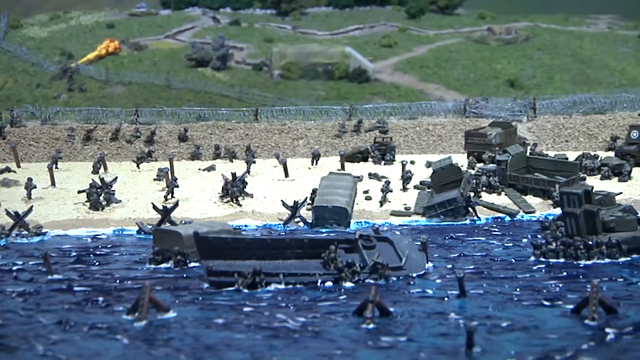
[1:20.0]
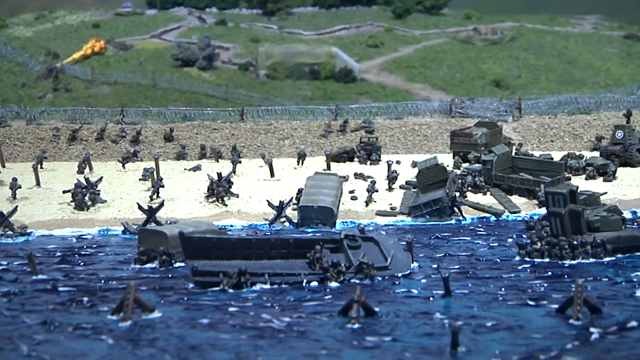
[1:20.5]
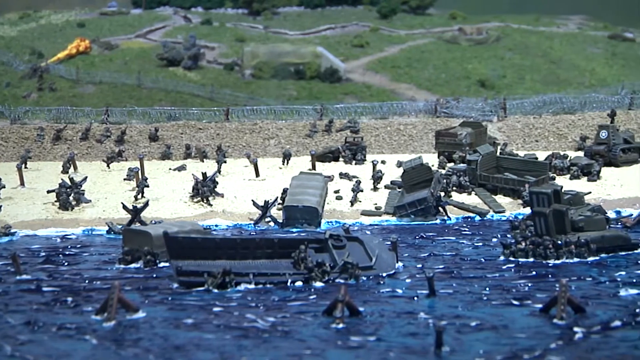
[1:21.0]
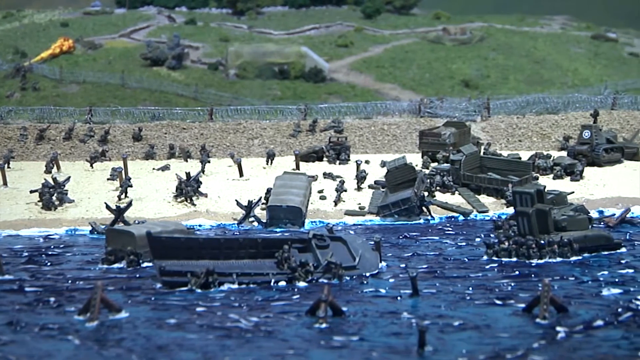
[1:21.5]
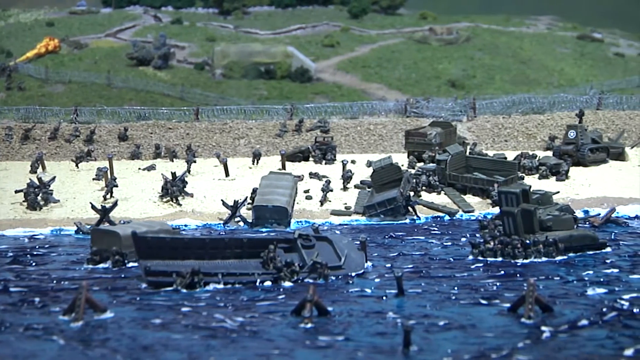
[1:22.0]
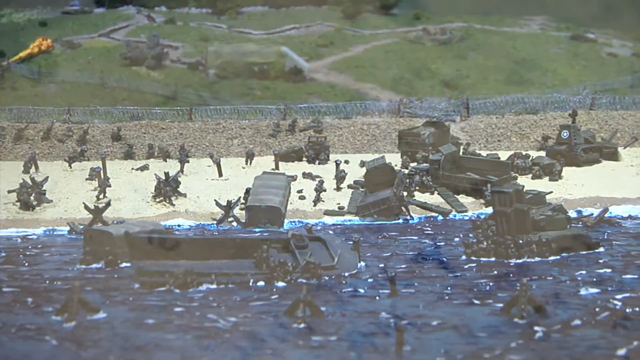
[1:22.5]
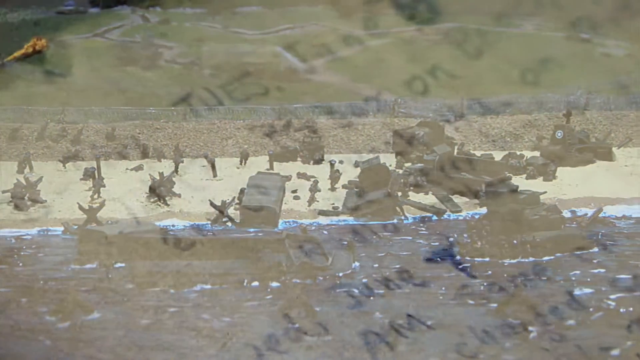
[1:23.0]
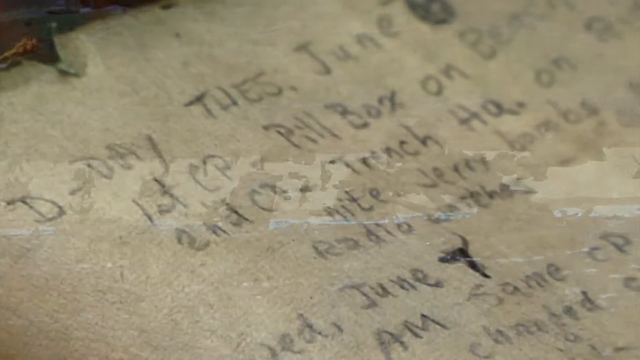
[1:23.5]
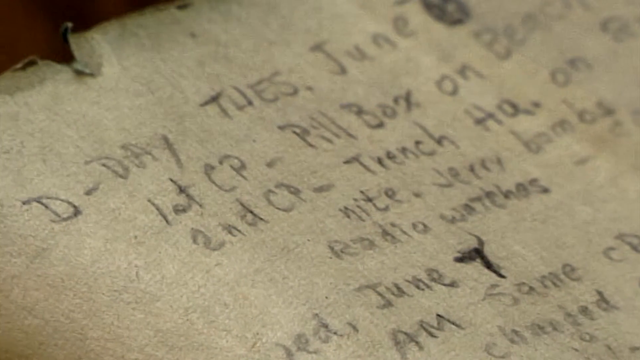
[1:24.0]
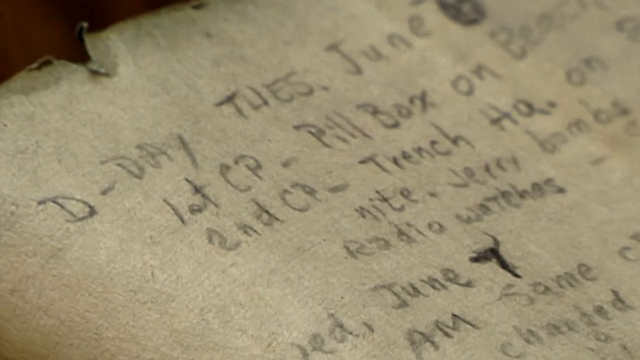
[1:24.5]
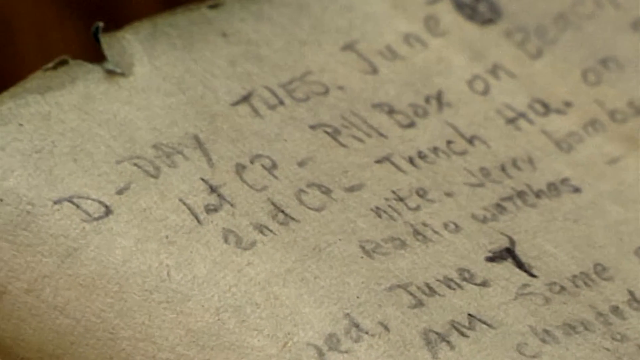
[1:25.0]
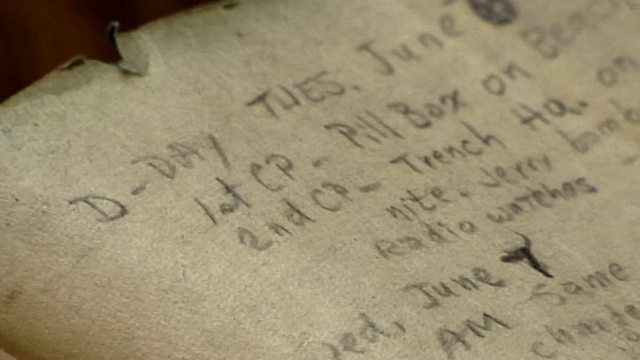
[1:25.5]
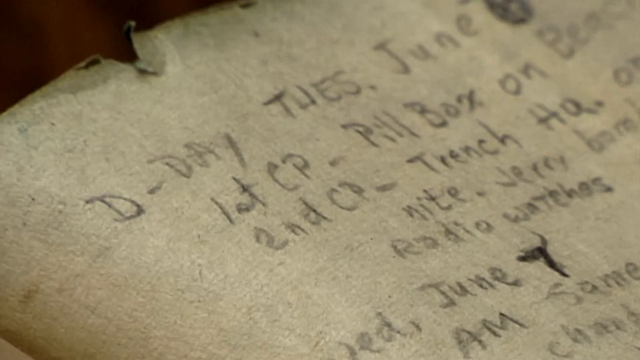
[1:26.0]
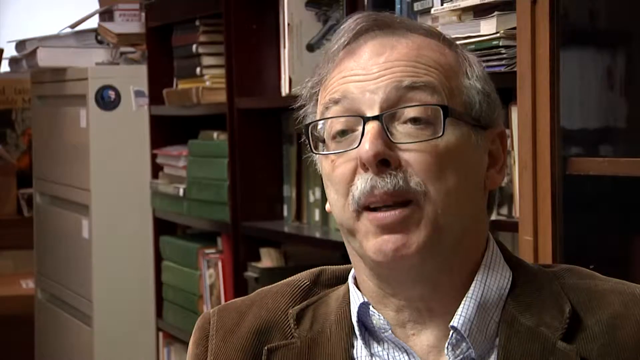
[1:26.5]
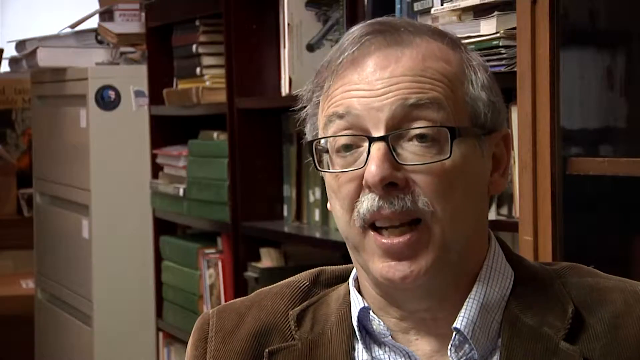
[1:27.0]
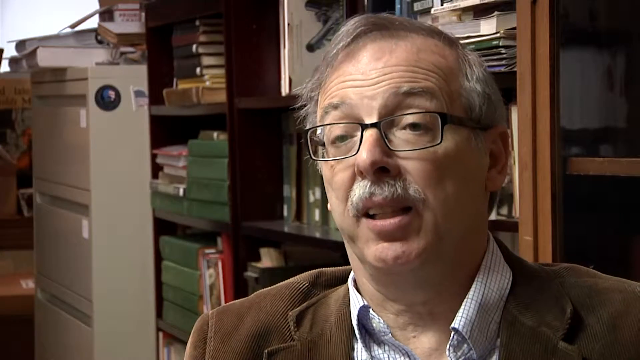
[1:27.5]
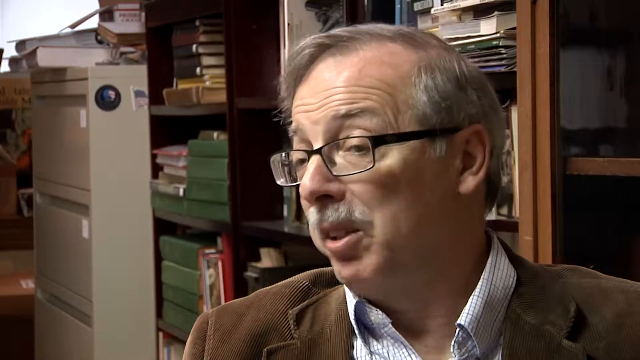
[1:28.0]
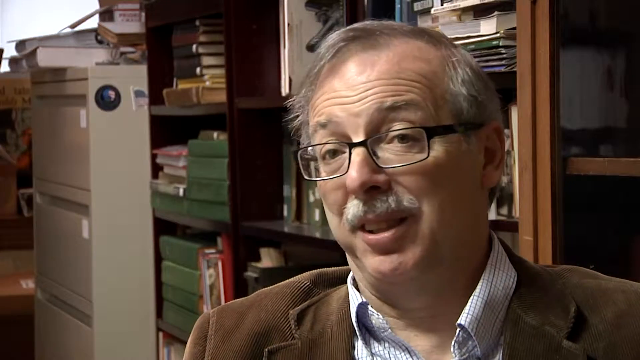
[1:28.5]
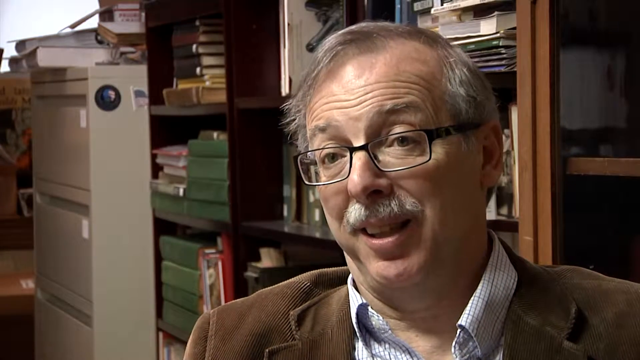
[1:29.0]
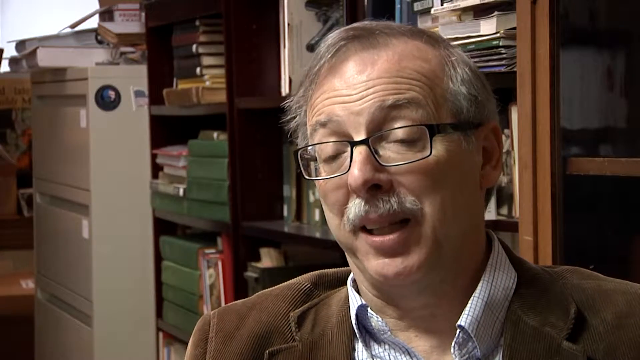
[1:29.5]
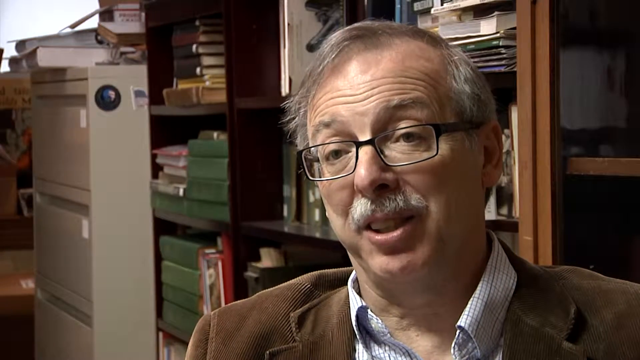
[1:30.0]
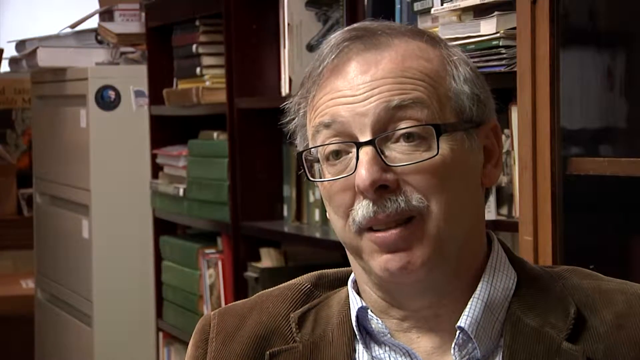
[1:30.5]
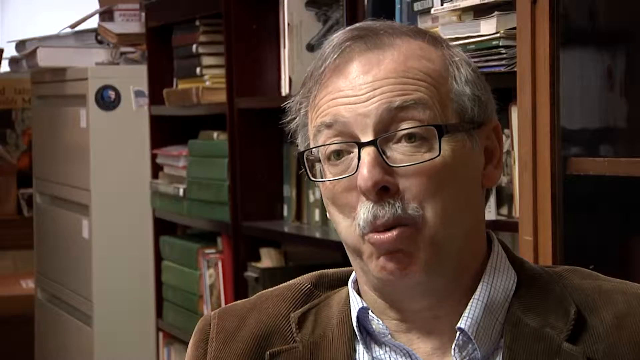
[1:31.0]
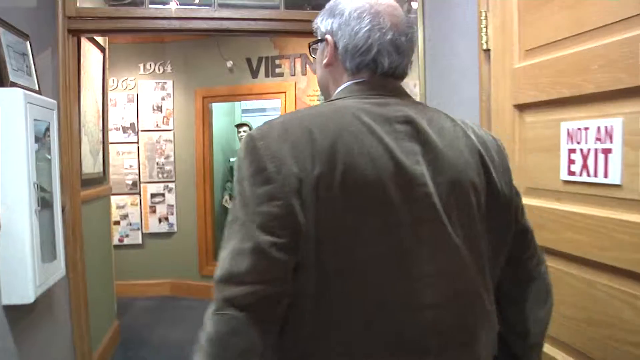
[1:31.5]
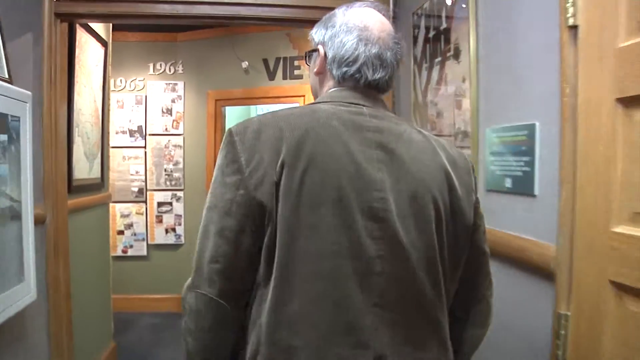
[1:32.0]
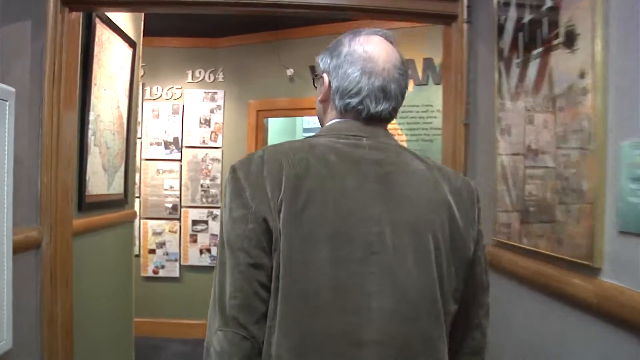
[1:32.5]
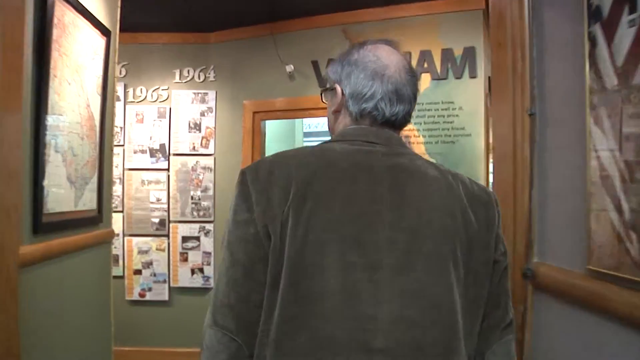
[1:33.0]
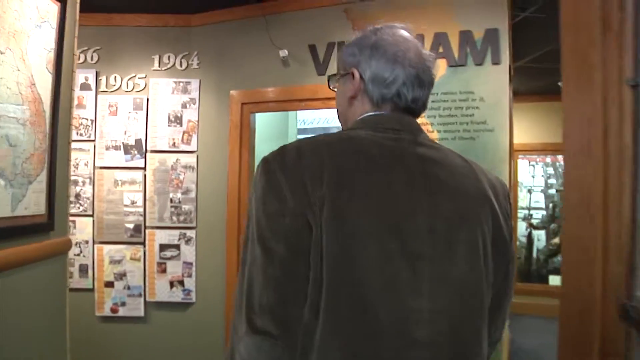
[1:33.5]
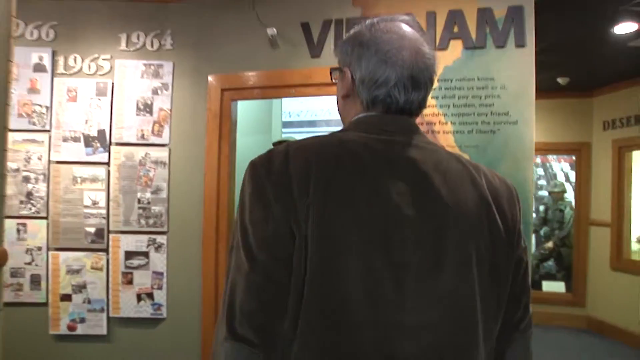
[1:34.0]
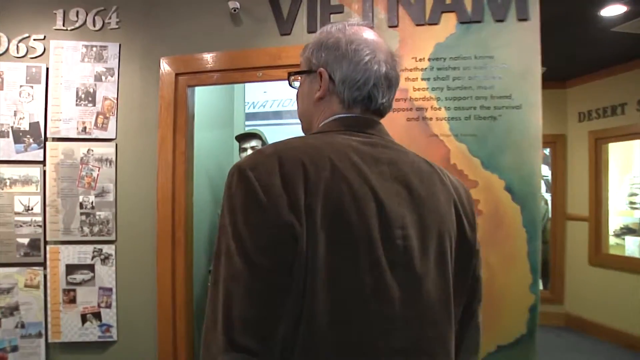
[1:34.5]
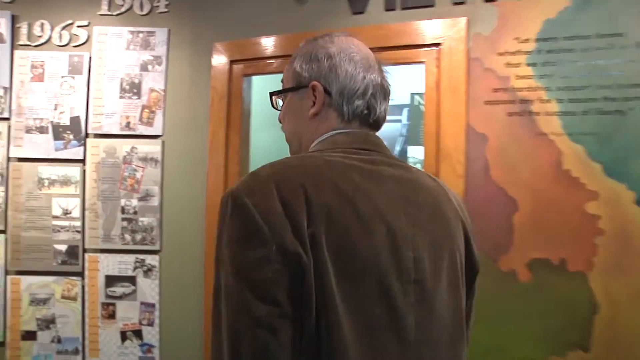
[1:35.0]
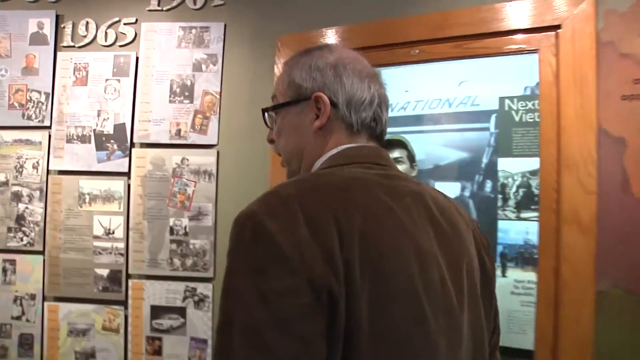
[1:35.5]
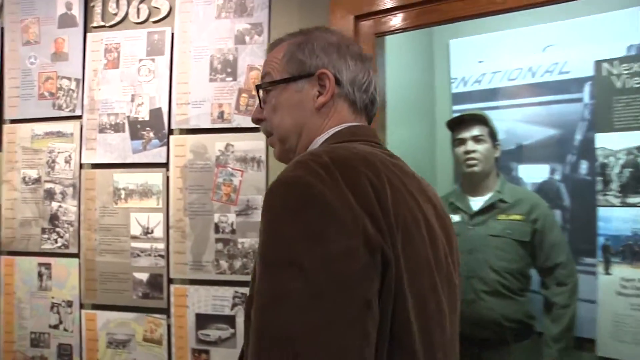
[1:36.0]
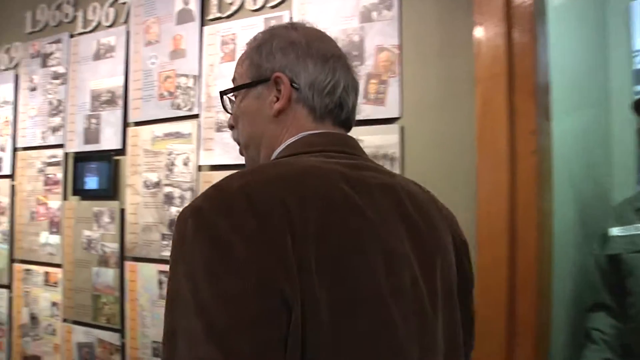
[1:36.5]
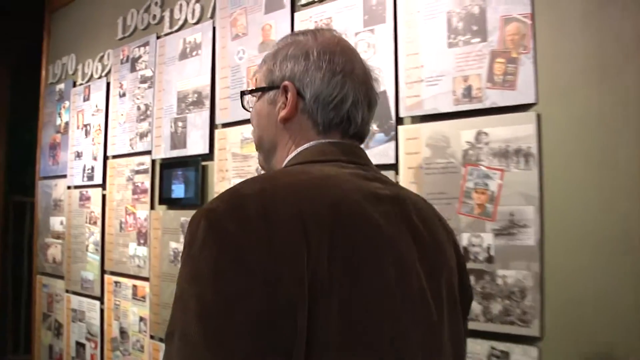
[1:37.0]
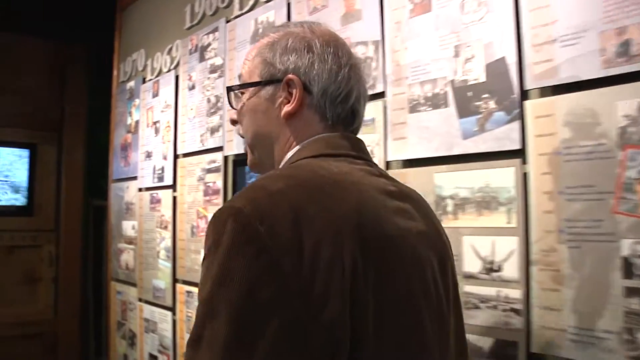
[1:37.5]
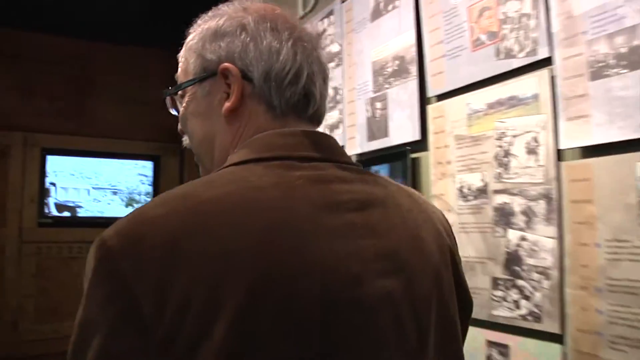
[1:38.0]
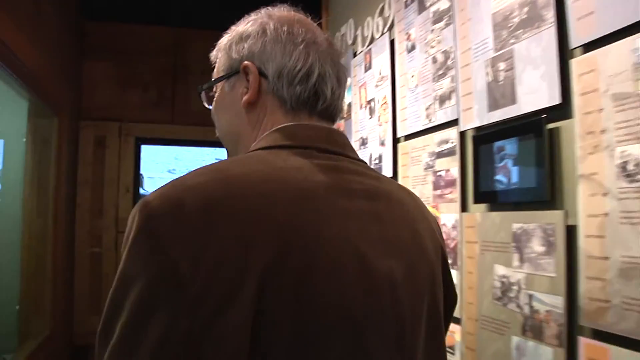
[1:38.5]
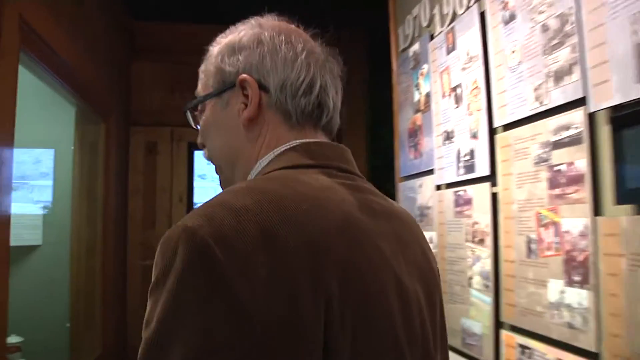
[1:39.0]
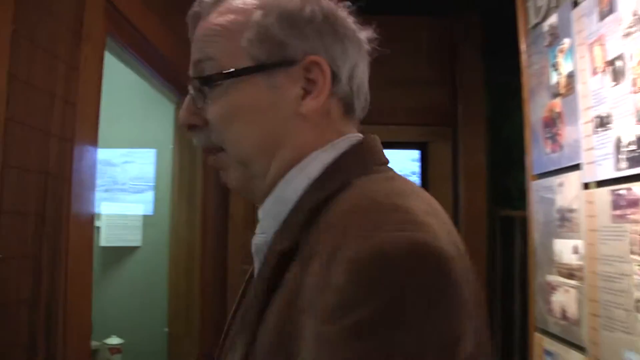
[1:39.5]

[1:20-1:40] A diorama, apparently of the invasion of Normandy, shows troop ships bringing troops onto the beach, which has a lot of huge steel objects that look like jacks. The camera pans to the right. "D-Day, Tuesday, June" is shown on what looks like part of a diary. A historian with a mustache and gray hair walks through the museum, where different years and, apparently, different wars are shown on the wall, including "Vietnam 1964, 1965, 1966." Under these words are photos of things that were happening, and on the right-hand side the words "desert storm" are faintly visible in the distance.